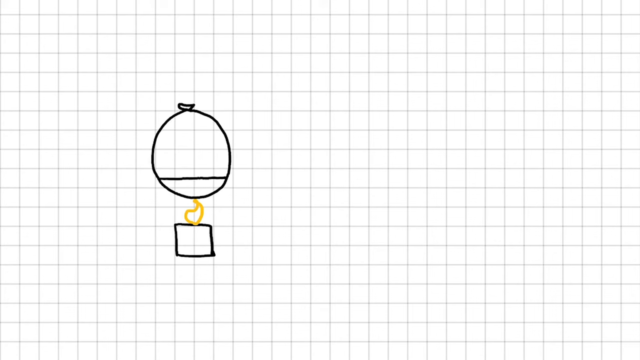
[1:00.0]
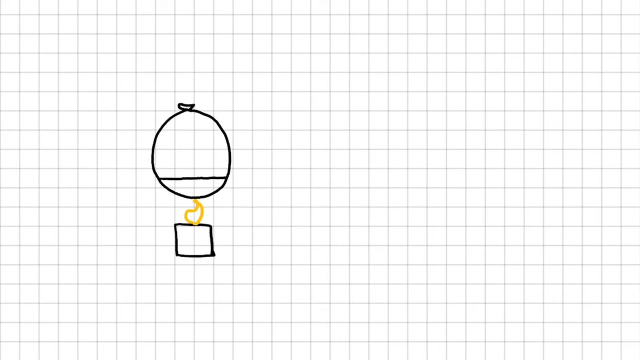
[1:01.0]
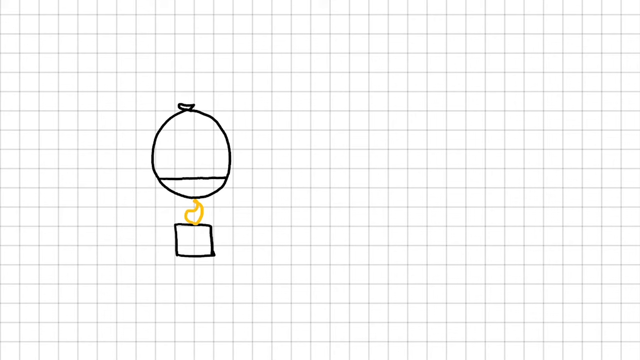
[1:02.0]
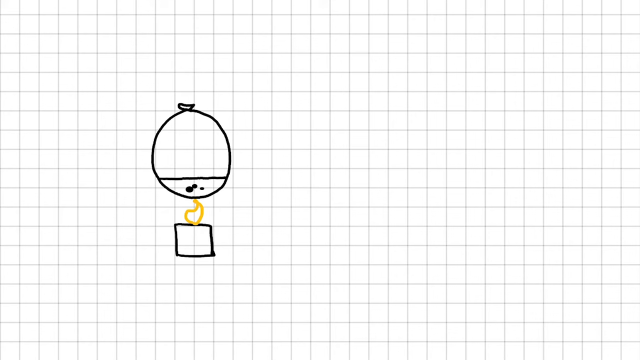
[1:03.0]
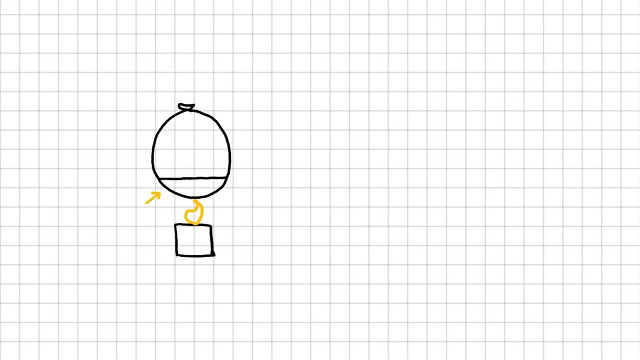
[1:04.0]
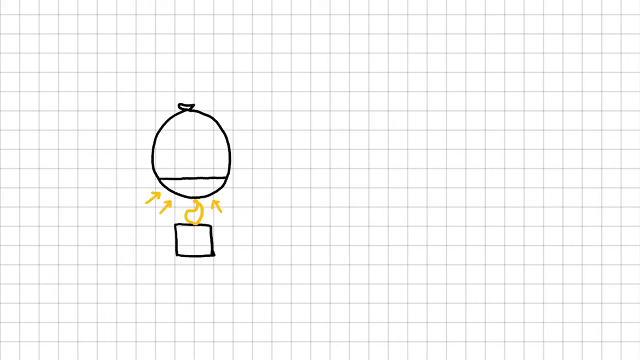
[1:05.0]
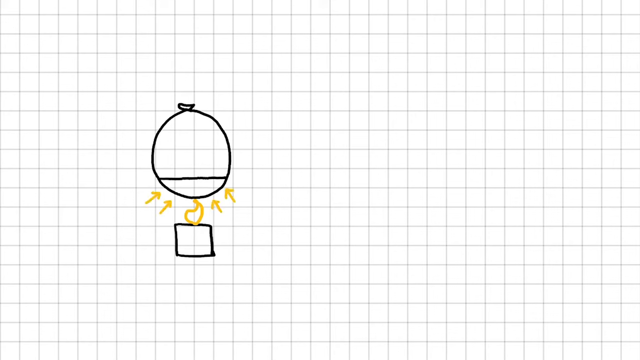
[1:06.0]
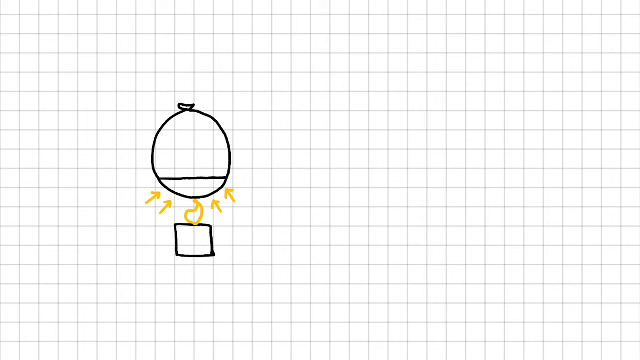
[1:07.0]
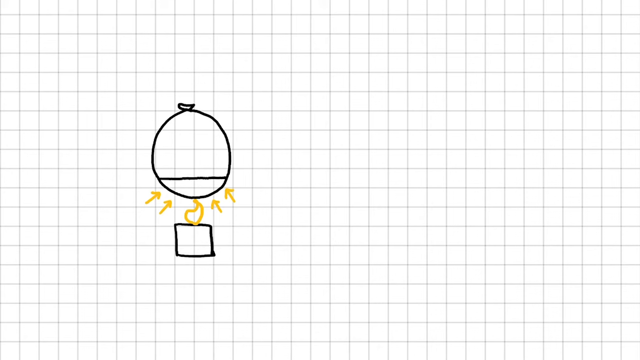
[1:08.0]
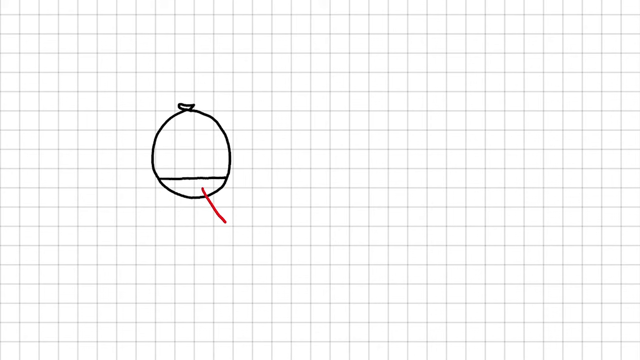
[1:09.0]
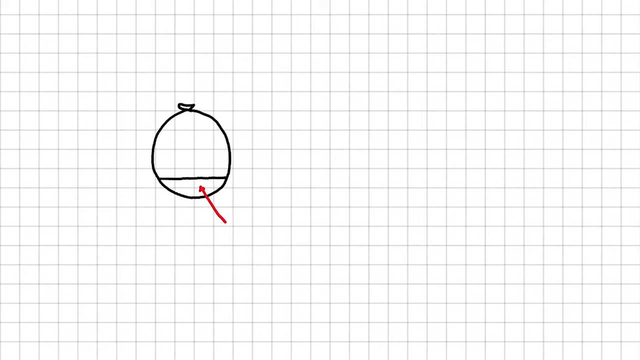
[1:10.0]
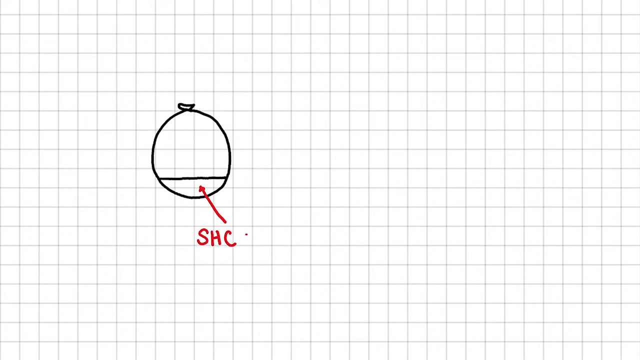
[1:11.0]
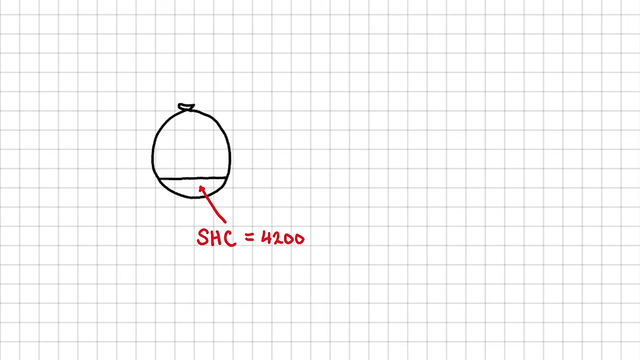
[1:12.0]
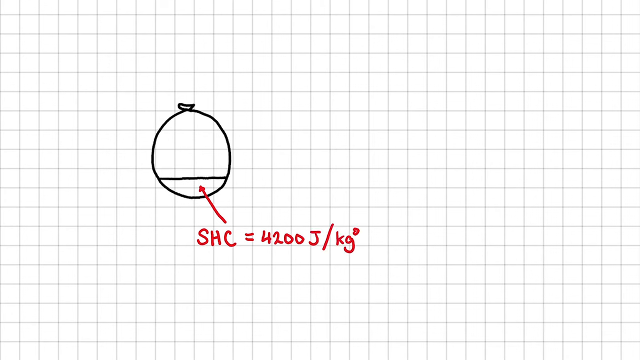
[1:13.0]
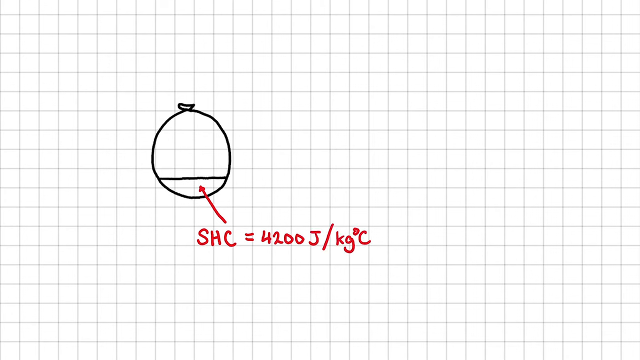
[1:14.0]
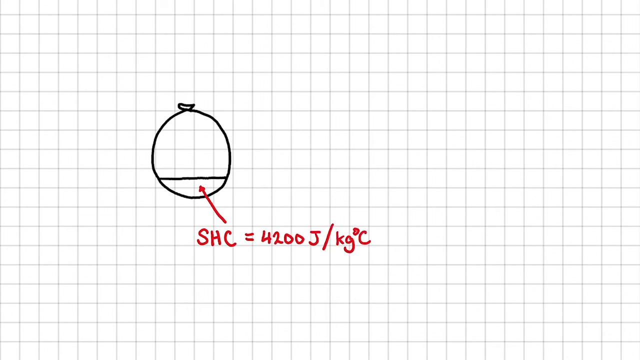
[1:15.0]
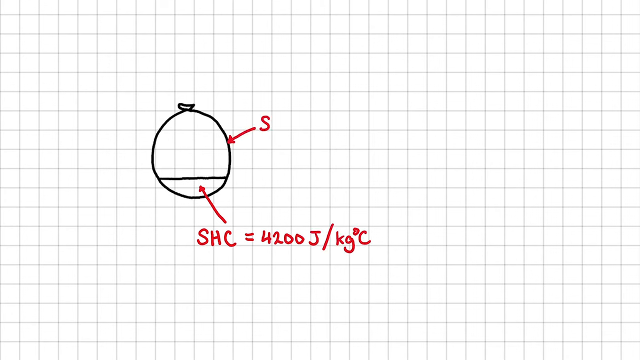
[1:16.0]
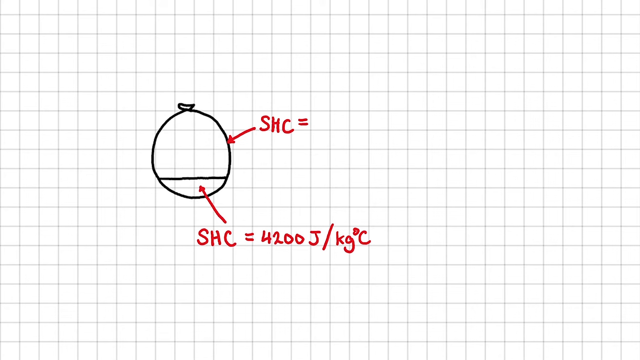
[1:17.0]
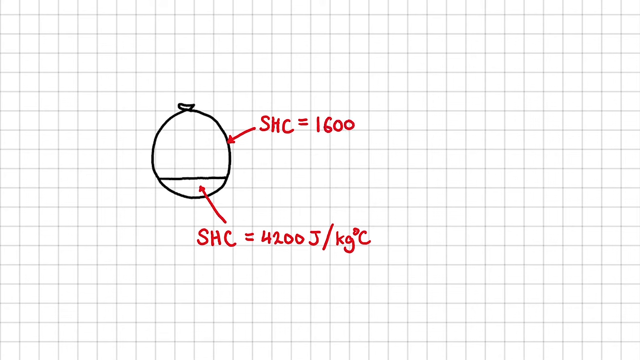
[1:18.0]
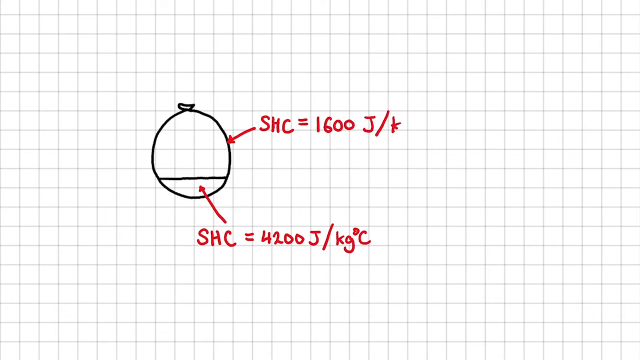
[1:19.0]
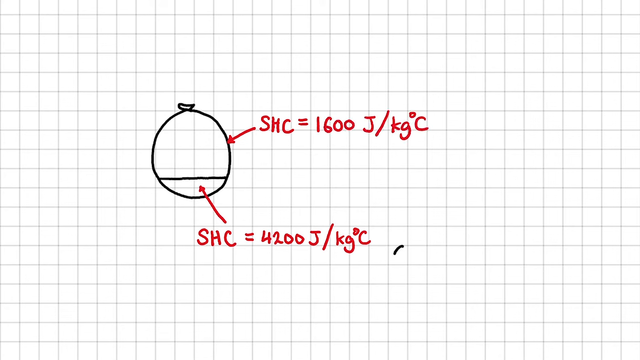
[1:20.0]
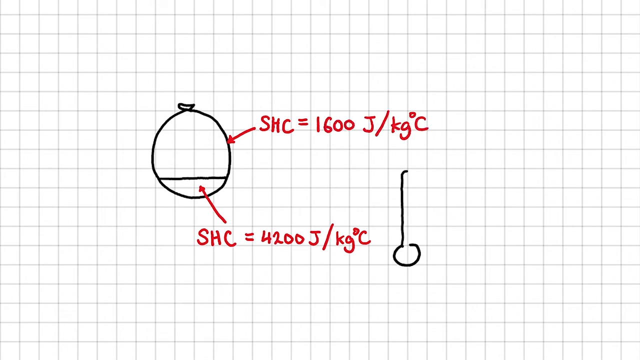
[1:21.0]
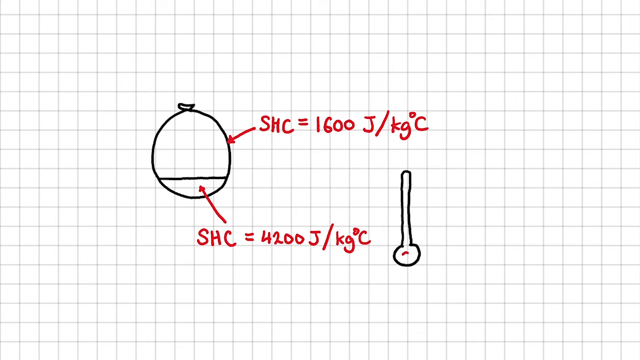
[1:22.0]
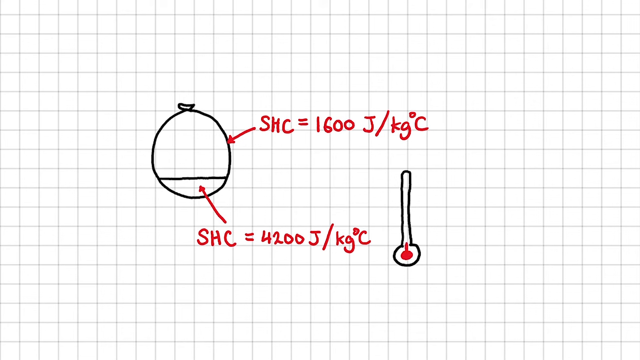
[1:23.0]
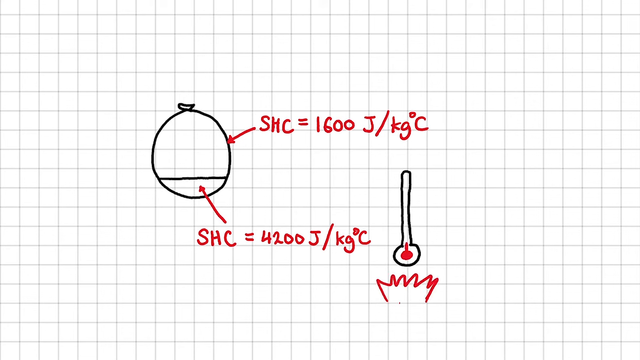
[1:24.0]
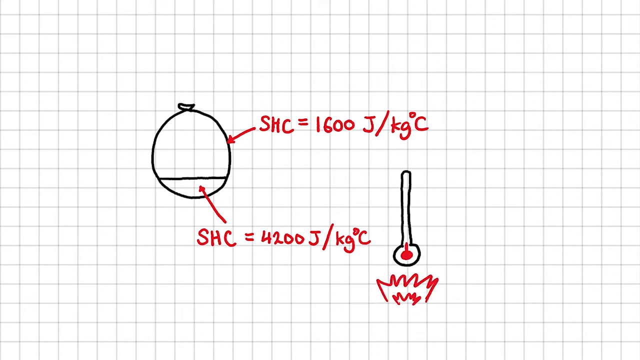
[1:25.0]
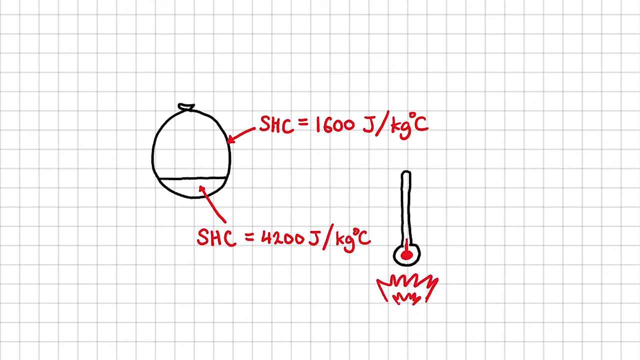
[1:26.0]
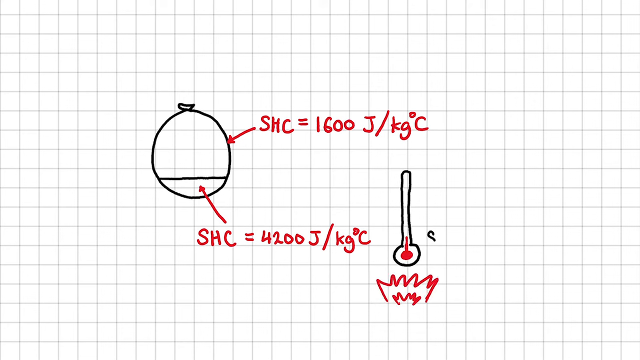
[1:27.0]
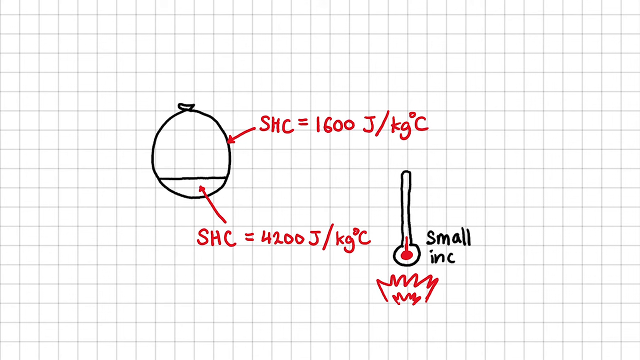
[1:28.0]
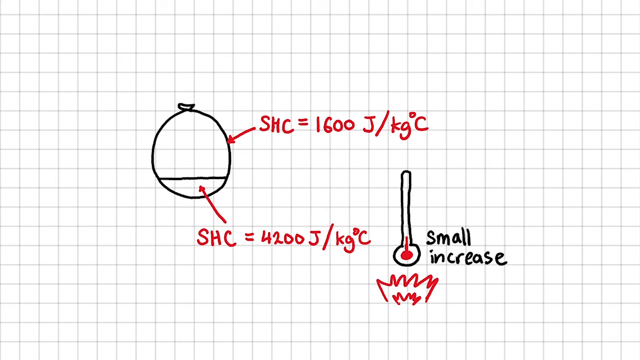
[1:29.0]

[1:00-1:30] The drawn balloon without water pops, shown by a popping animation around it. The person then draws another balloon with a line representing the water level inside it, and draws the smoke residues that were left on the balloon with water. Yellow arrows point toward the water level, probably indicating that the water prevents the balloon from popping. A red arrow is labeled in red with SHC = 4200 joule per kilogram degree Celsius. Another arrow is drawn at the top, pointing toward the empty space of the balloon, labeled SHC = 1600 joules per kg degree Celsius. The person then draws a thermometer on the right side, drawn in black with a red dot in its round bulb, and below it a fire animation drawn in red. Text on the right side reads "small increase".